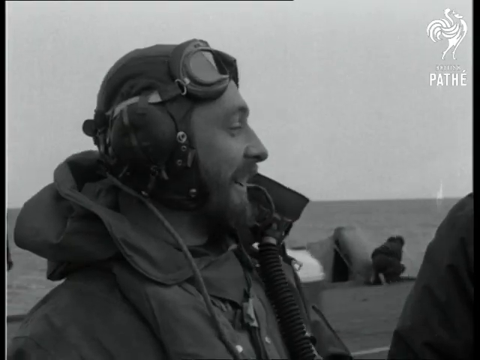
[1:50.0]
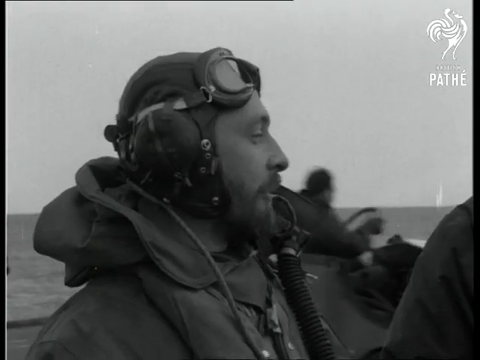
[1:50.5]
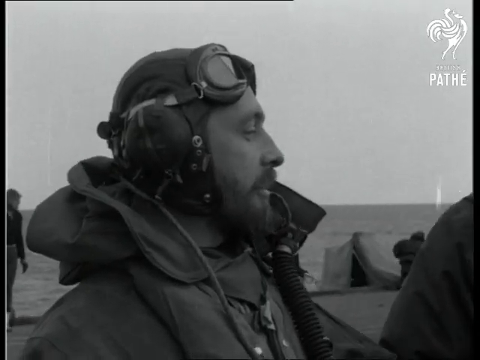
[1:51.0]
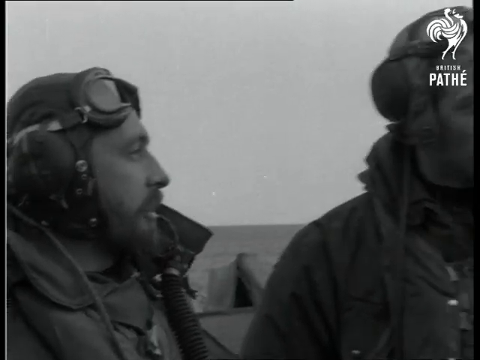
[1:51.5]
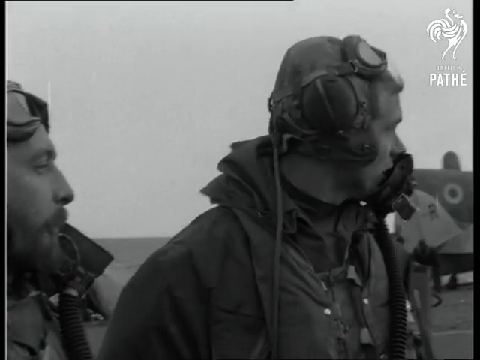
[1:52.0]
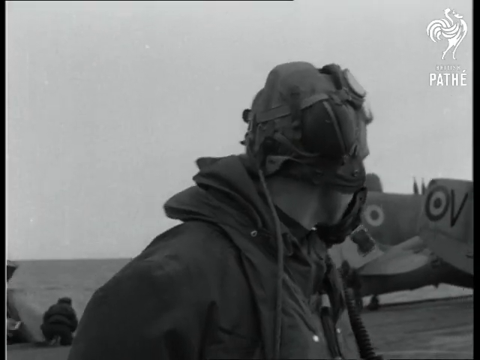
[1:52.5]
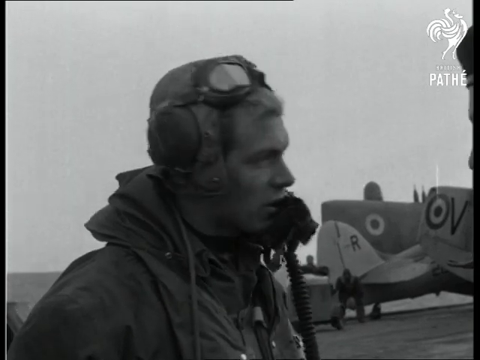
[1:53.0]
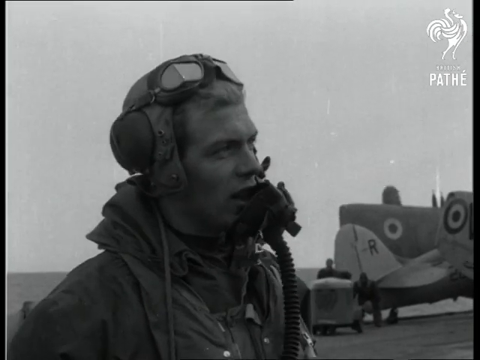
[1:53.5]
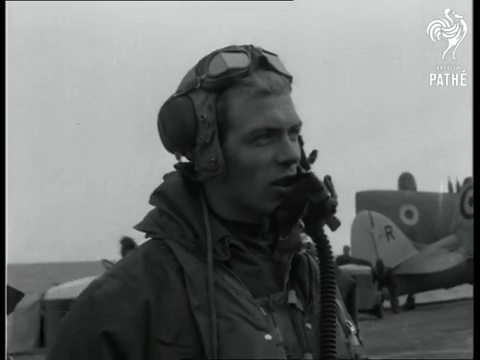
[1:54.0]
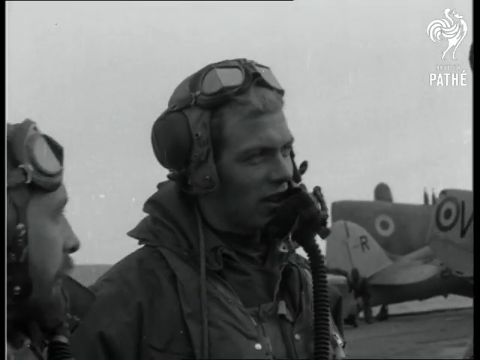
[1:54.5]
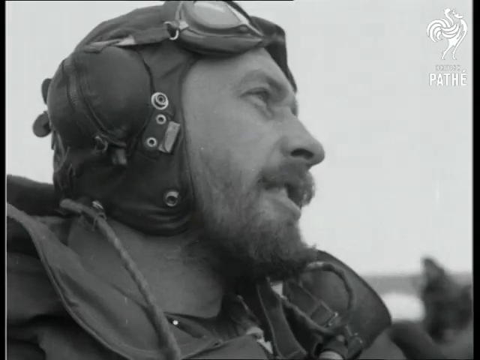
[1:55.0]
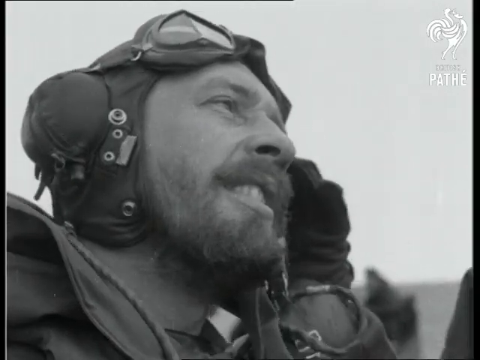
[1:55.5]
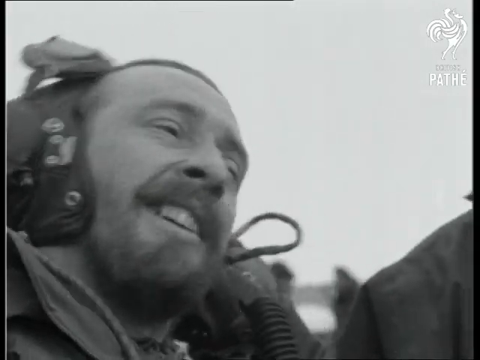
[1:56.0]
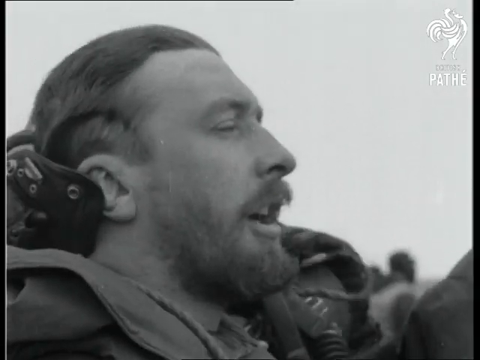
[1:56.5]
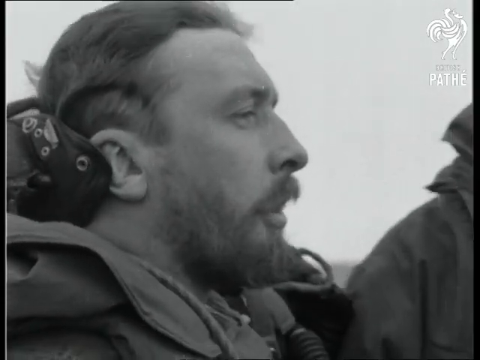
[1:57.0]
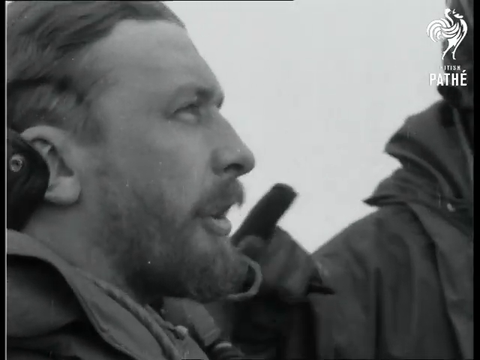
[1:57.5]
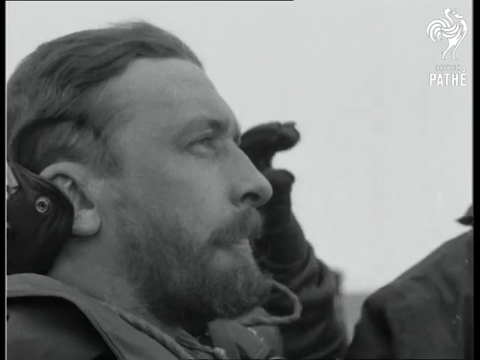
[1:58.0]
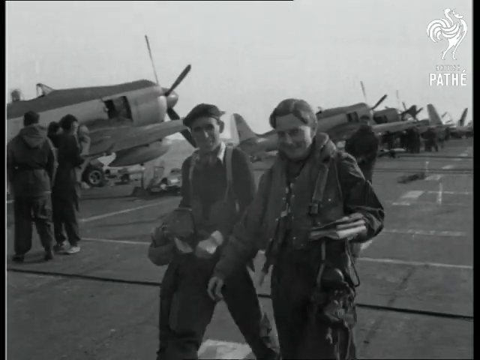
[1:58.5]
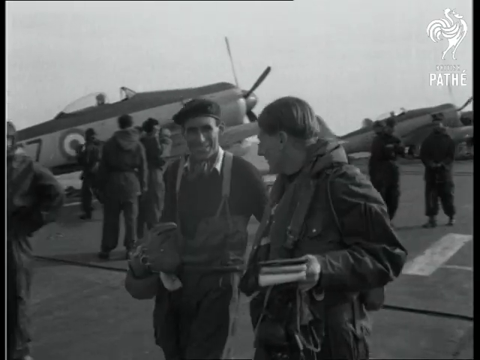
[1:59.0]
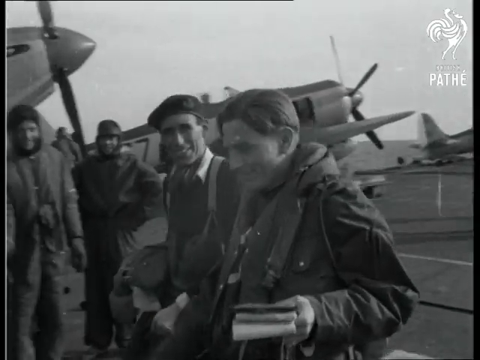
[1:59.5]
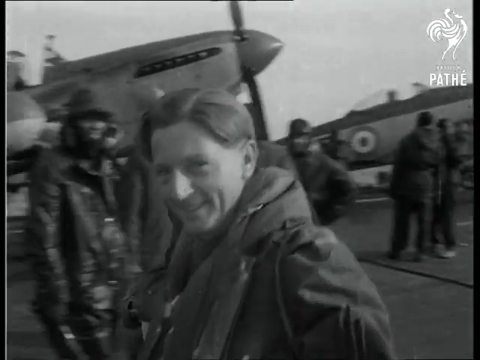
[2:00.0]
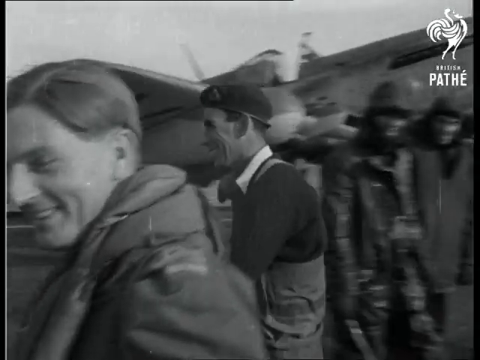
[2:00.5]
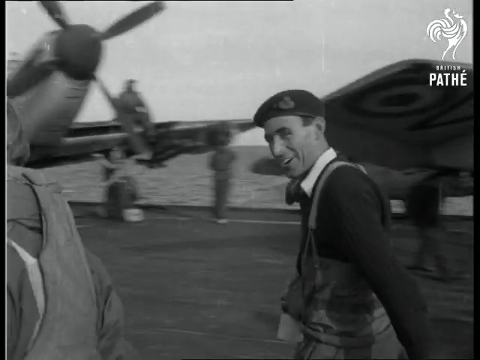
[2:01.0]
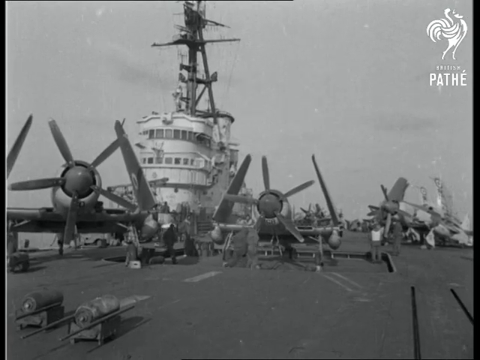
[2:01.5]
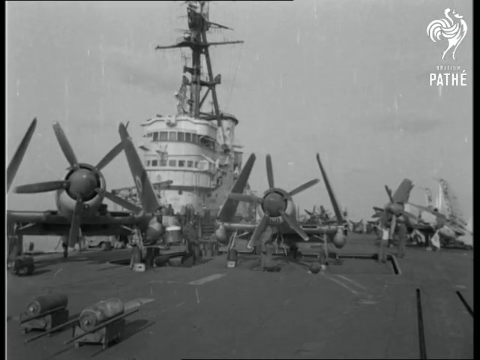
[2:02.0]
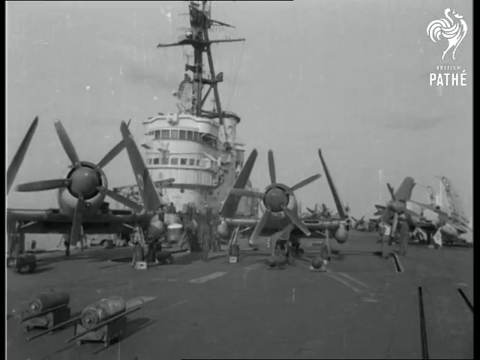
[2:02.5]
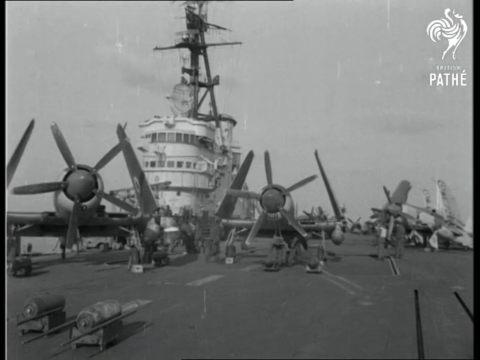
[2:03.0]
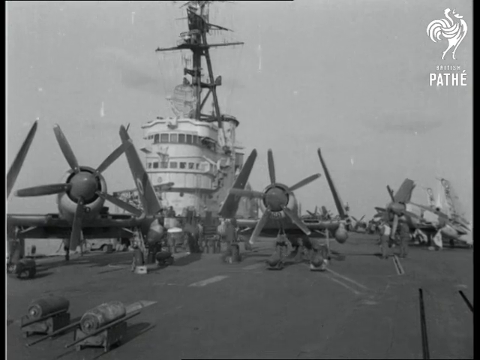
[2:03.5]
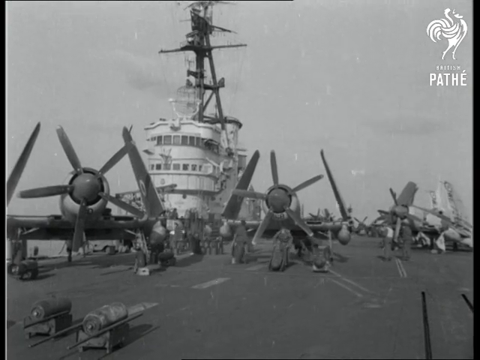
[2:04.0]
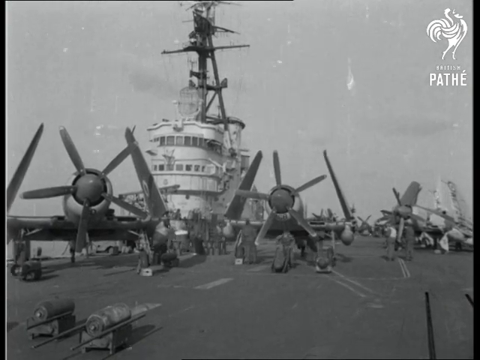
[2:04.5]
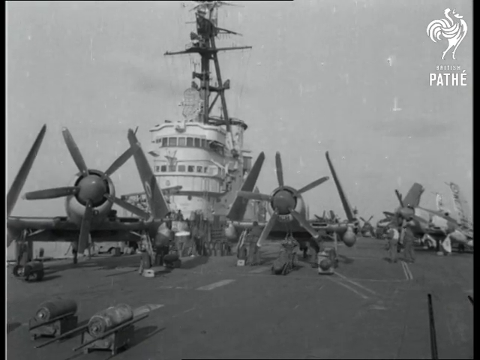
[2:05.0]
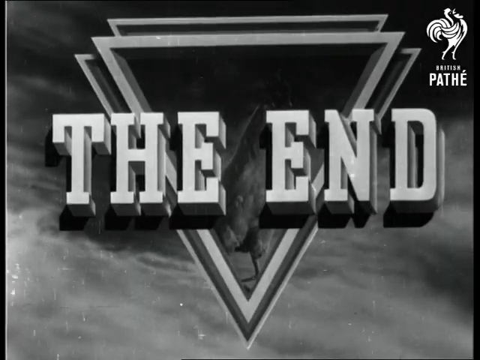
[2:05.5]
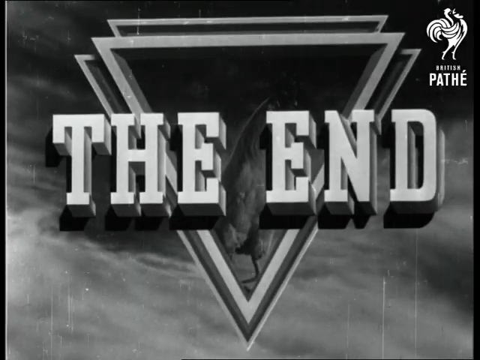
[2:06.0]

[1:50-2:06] On a carrier deck, a soldier stands in profile facing right, wearing earmuffs, with goggles above his eyes that suggest he may be a pilot. In the medium distance, a man crouches on the edge of the carrier deck, and various soldiers move across the deck. A wide shot then shows a pilot or navigator wearing aeronautical glasses and earmuffs, with a rebreather or oxygen mask falling from his mouth but still attached to his head. He seems happy and seems to be engaged in a mission debrief. The soldiers are smiling. The video ends with a shot of the planes waiting on deck, and the words "THE END" appear against concentric equilateral triangles with their points facing downward.